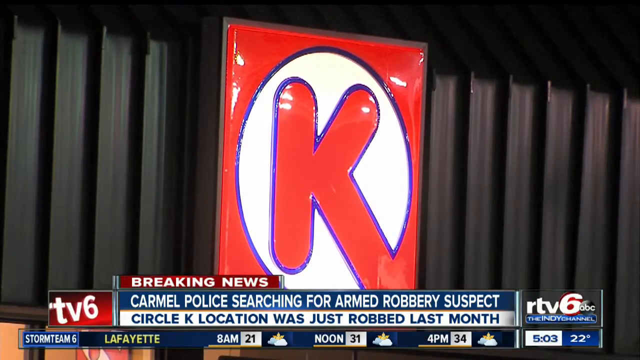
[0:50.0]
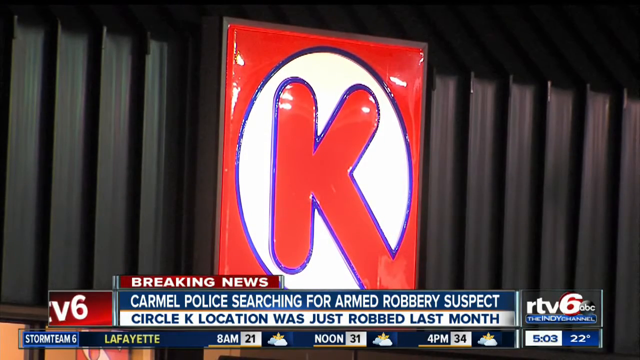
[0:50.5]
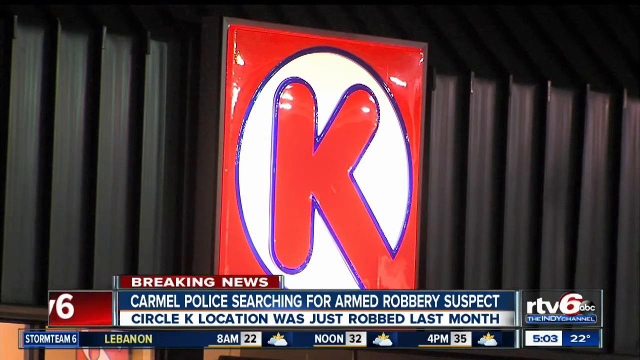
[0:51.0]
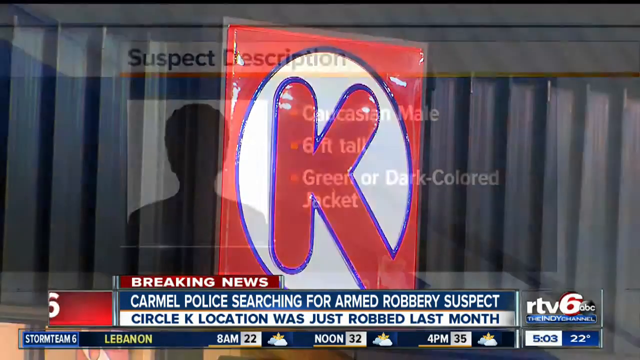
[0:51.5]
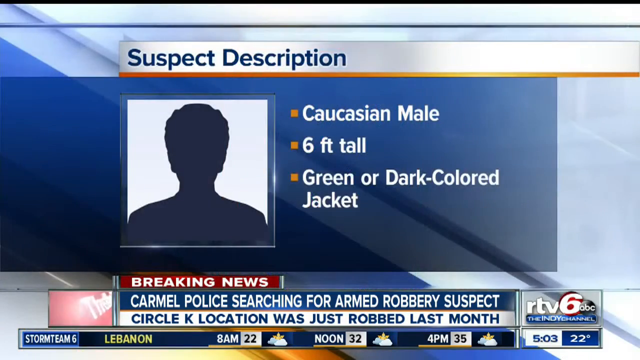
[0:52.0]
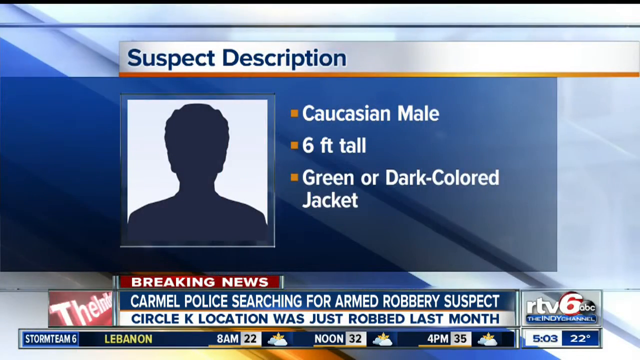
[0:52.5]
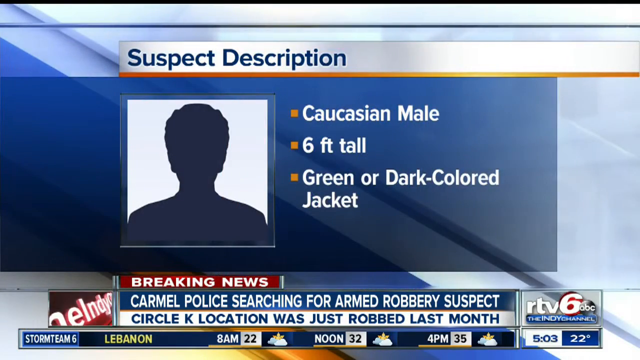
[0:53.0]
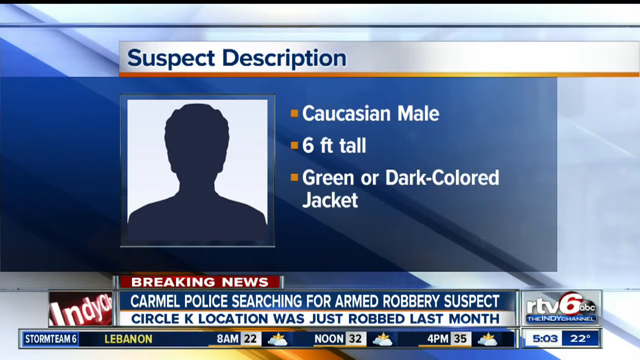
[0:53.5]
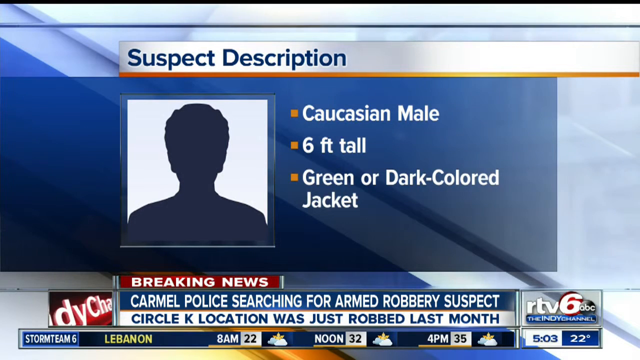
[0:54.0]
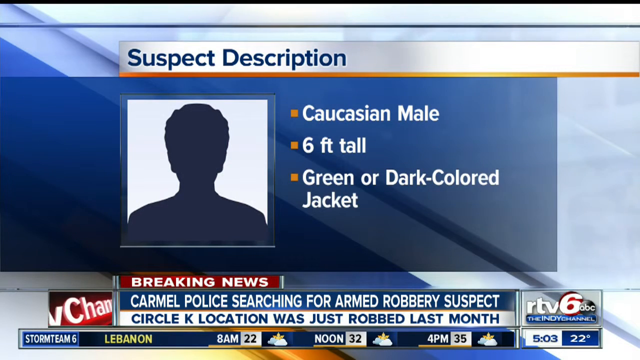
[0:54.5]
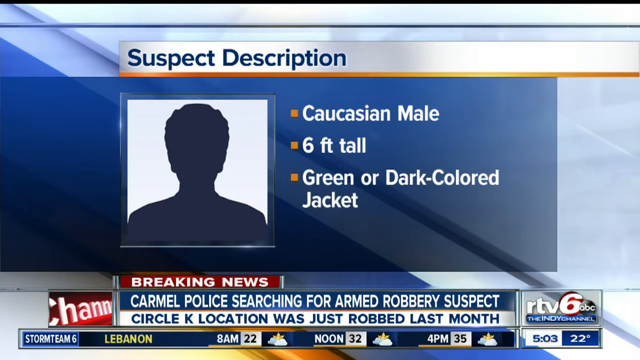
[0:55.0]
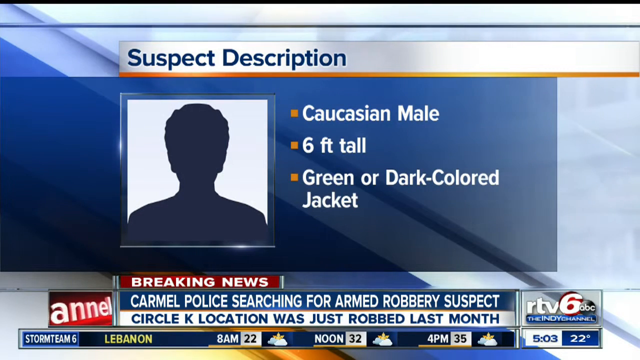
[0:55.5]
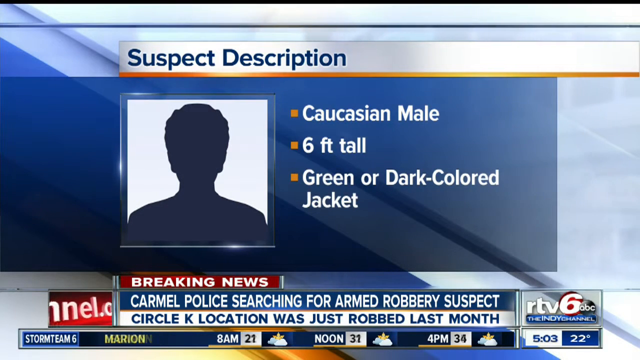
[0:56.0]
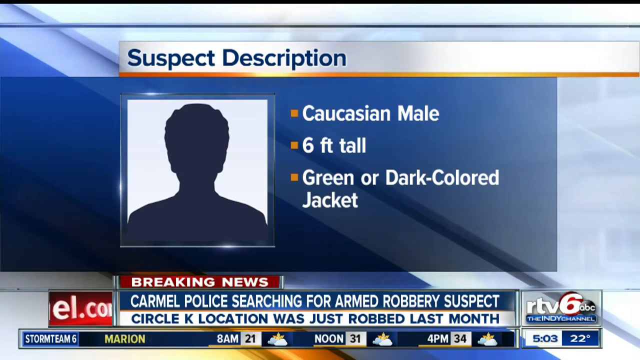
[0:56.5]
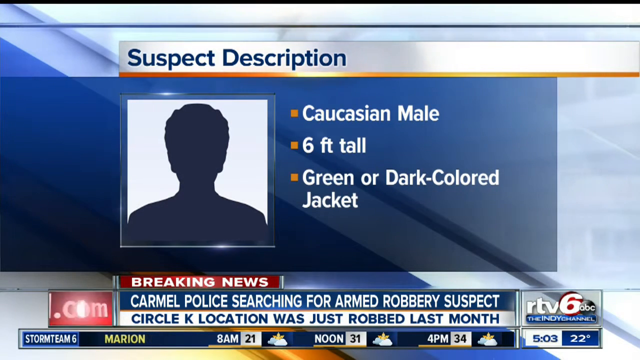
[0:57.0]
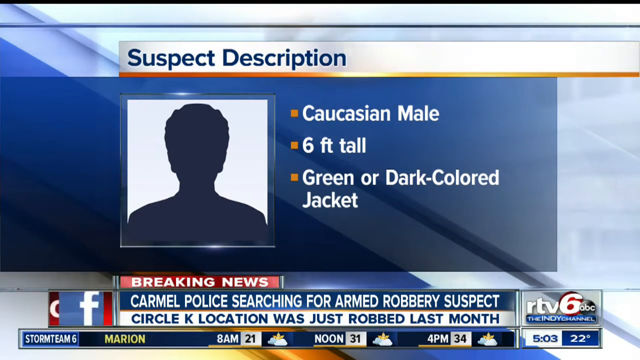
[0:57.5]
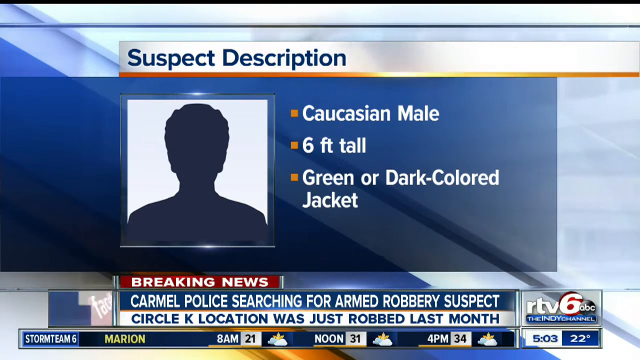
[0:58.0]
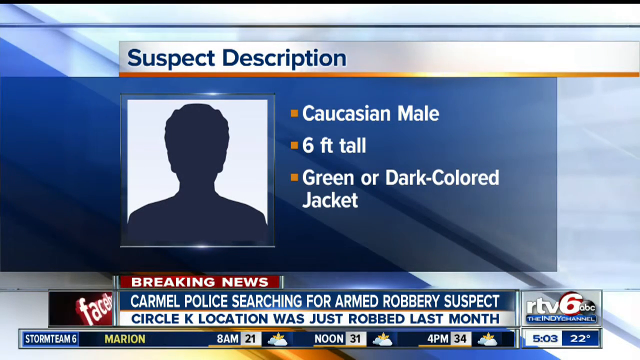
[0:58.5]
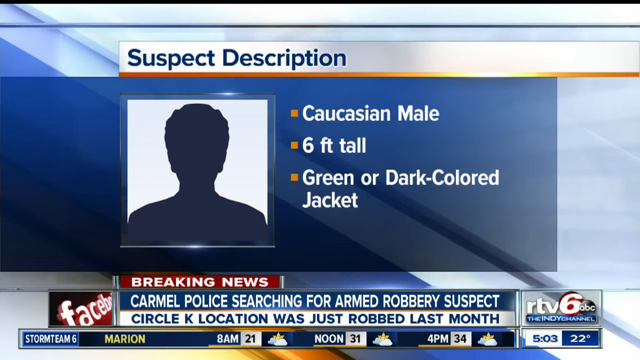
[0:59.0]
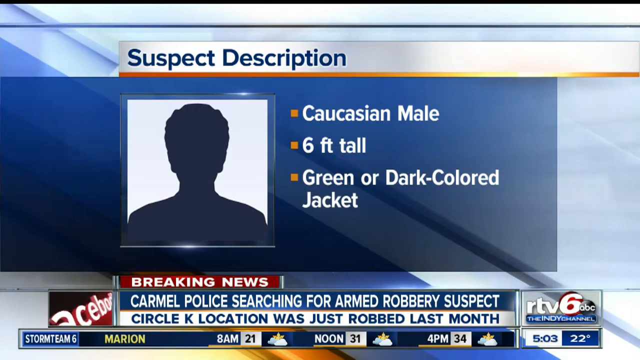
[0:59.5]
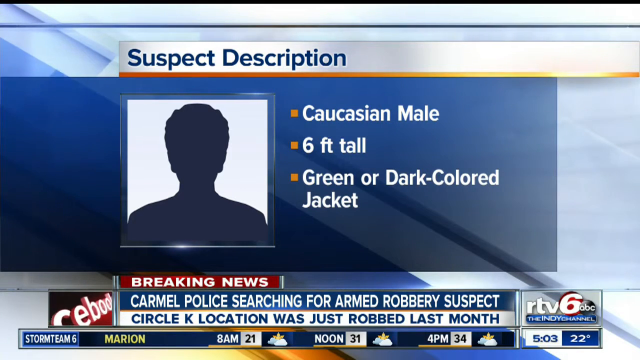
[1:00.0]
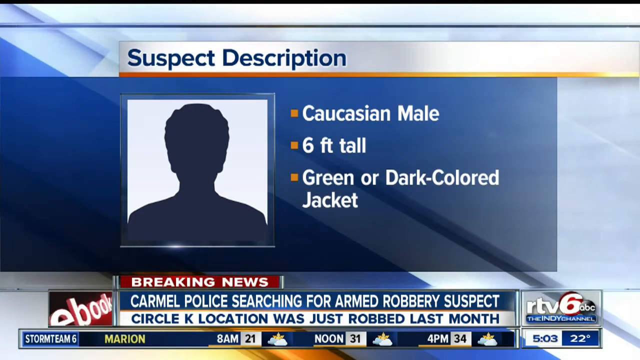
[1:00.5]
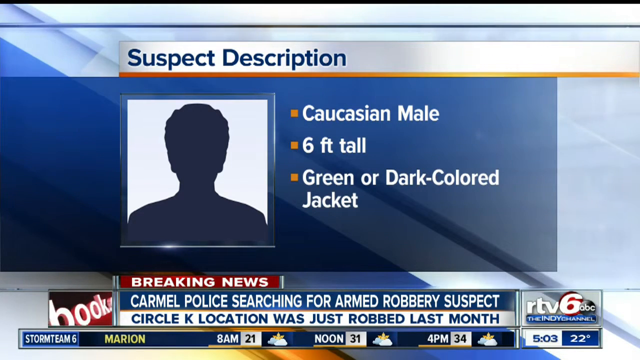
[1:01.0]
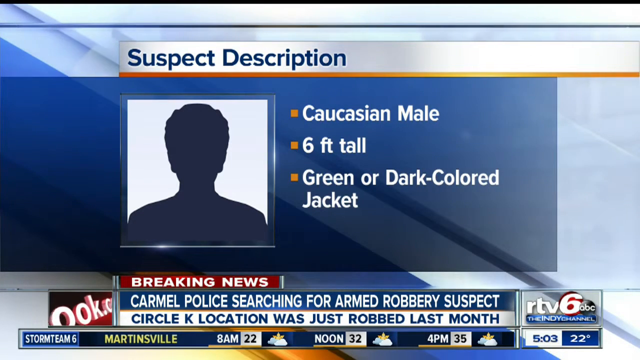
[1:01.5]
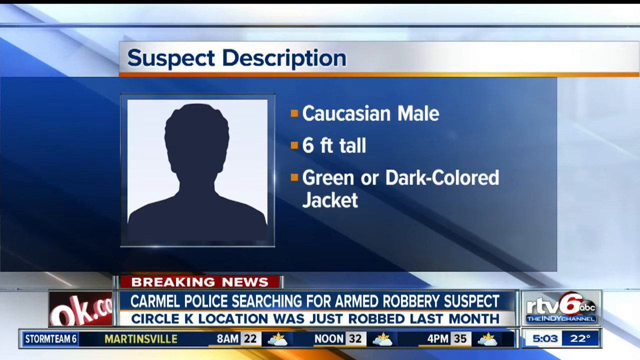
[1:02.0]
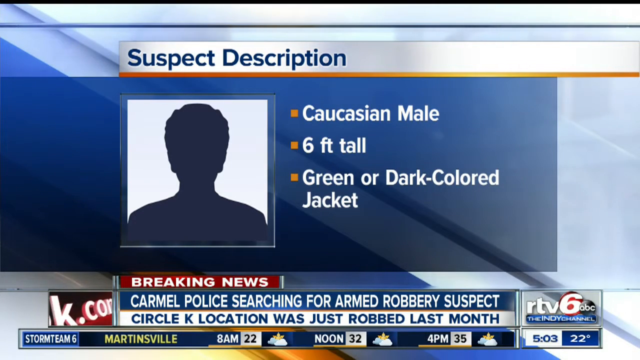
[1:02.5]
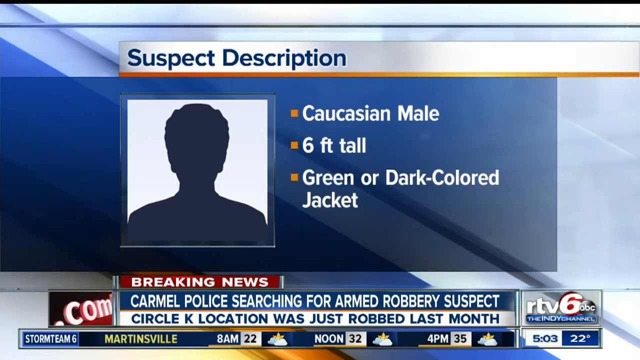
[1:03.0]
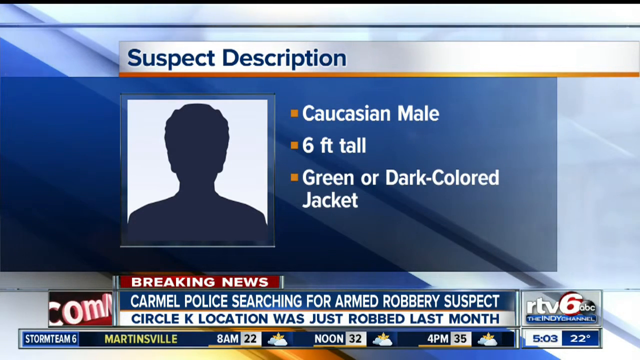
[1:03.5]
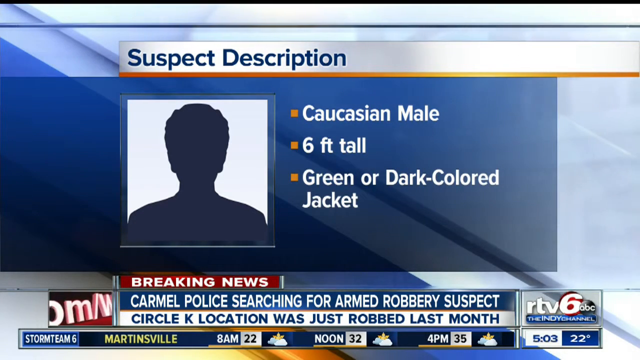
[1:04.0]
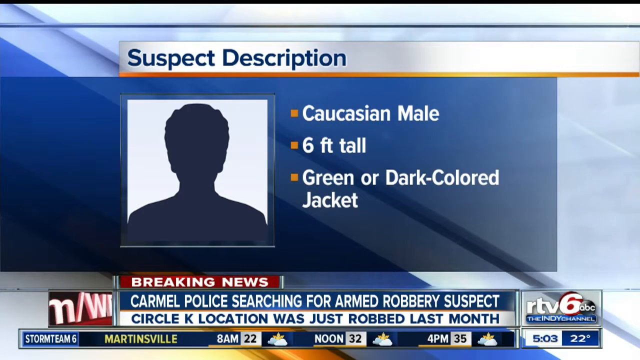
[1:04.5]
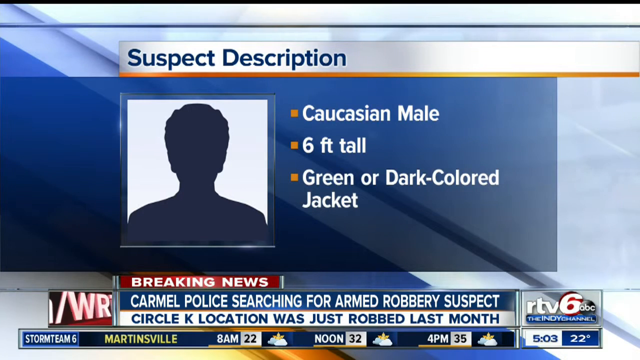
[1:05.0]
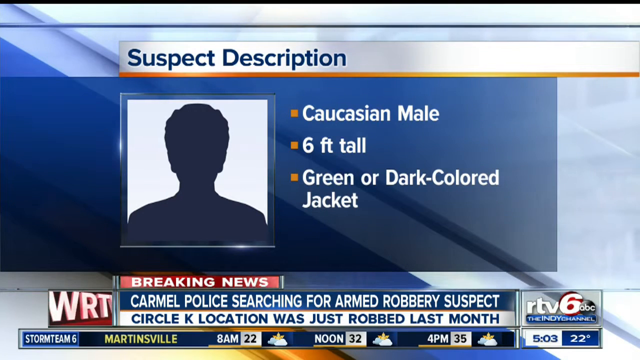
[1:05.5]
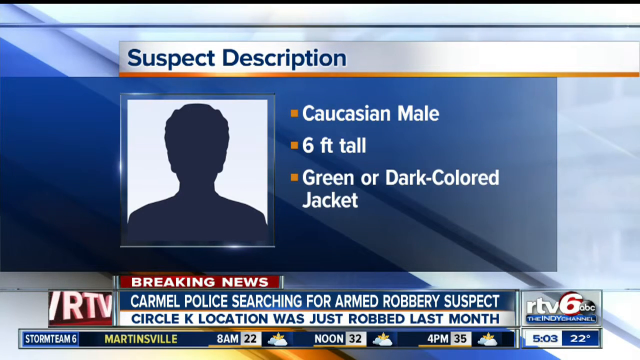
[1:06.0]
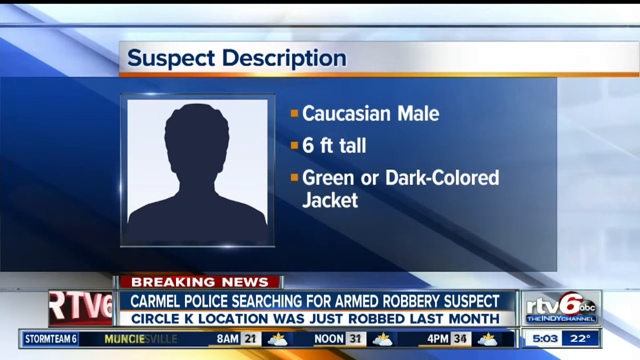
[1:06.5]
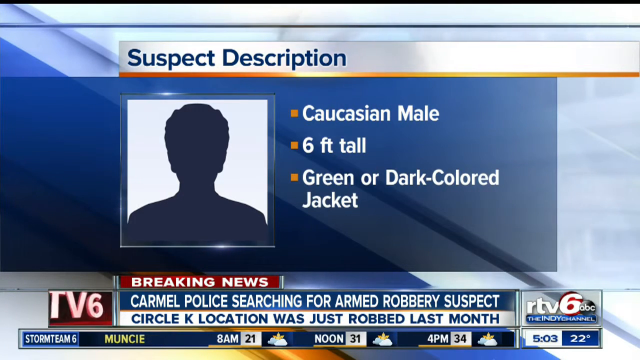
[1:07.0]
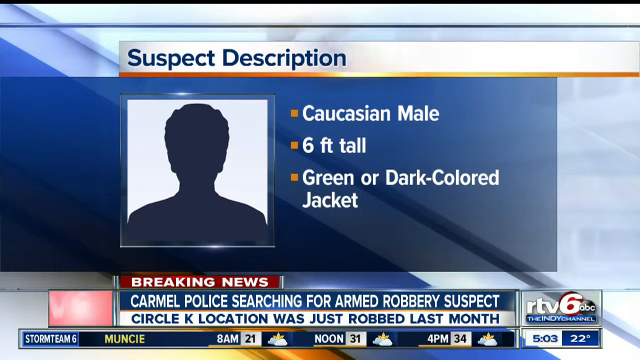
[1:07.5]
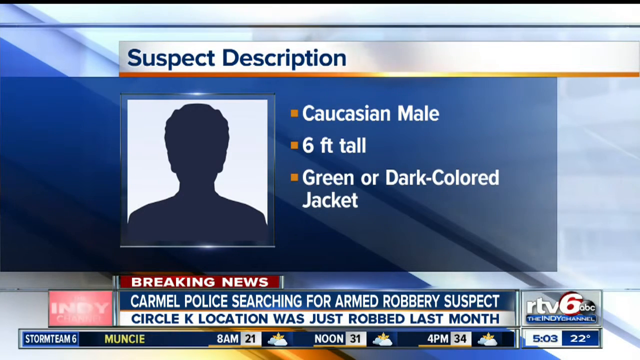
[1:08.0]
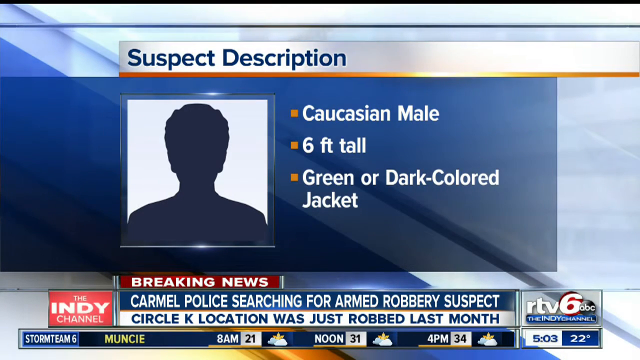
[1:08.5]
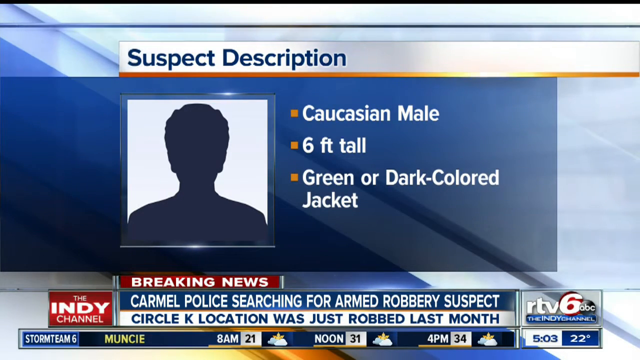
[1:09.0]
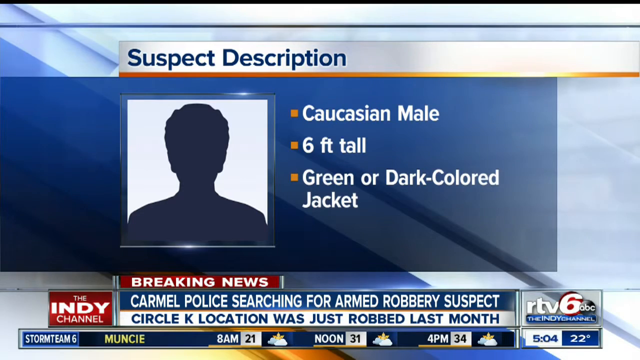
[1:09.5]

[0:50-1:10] The top of the storefront is shown, with a square red sign containing a white circle, inside of which is a red K outlined in purple; the white circle is also outlined in purple. Below it is the text "breaking news," then "Carmel police searching for armed robbery suspect," and below that "Circle K location was just robbed last month." The view switches to a suspect profile screen on a blue background. At the top it says "suspect description," and below that is a silhouette of a man. To the right of the silhouette is a yellow square with "Caucasian male" beside it, below that another yellow square with "six foot tall," and below that another yellow square with "green or dark colored jacket." The same text remains at the bottom of the screen, and this screen stays up for a while.